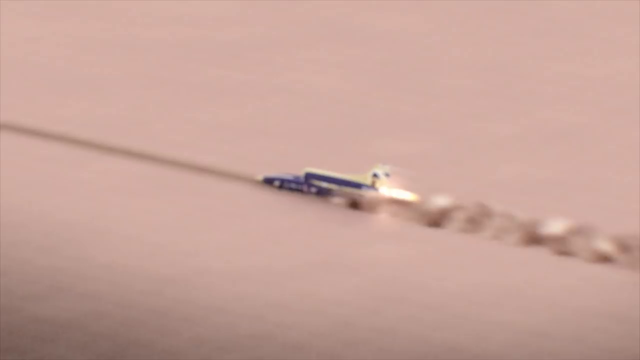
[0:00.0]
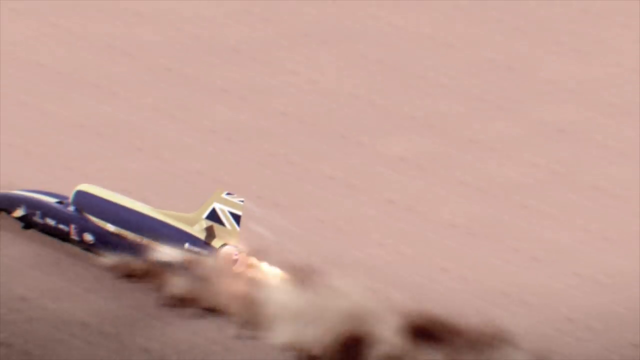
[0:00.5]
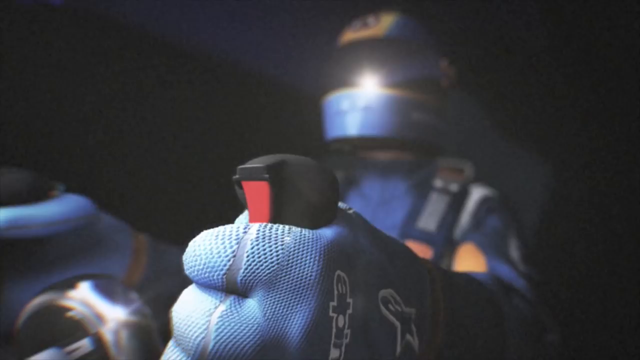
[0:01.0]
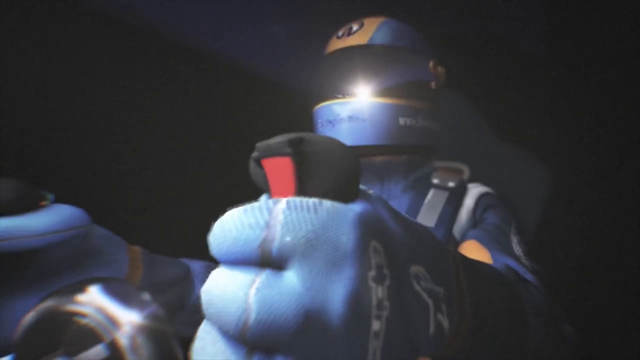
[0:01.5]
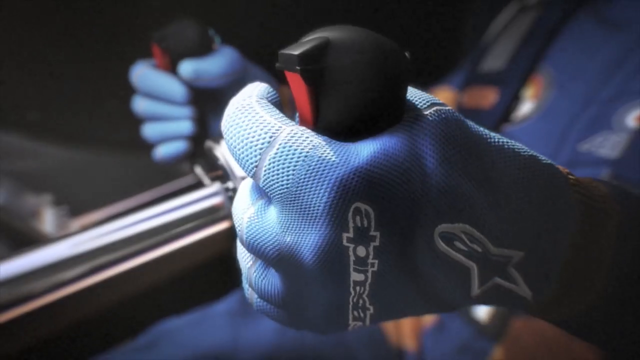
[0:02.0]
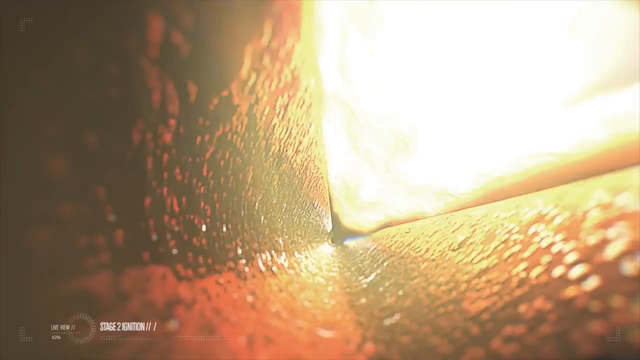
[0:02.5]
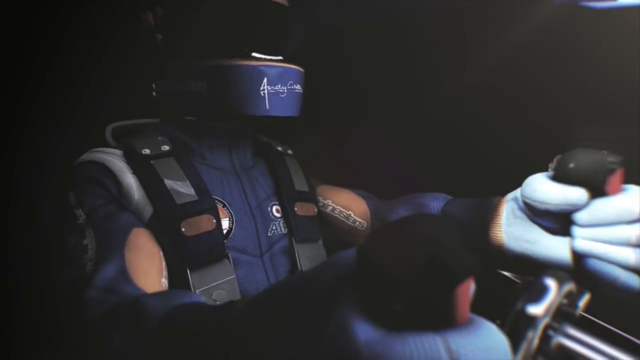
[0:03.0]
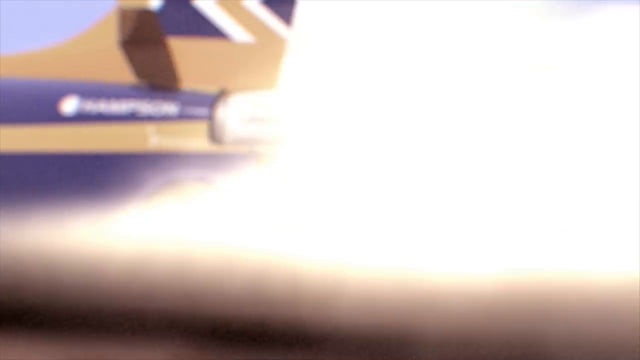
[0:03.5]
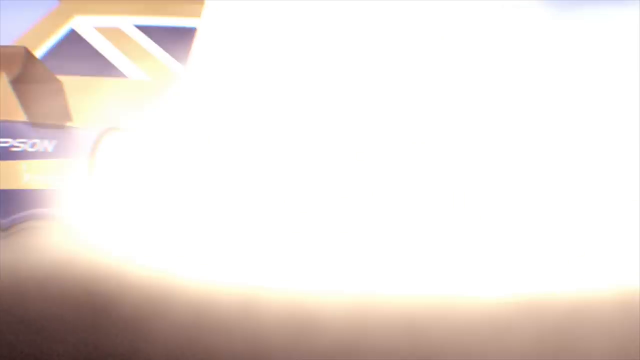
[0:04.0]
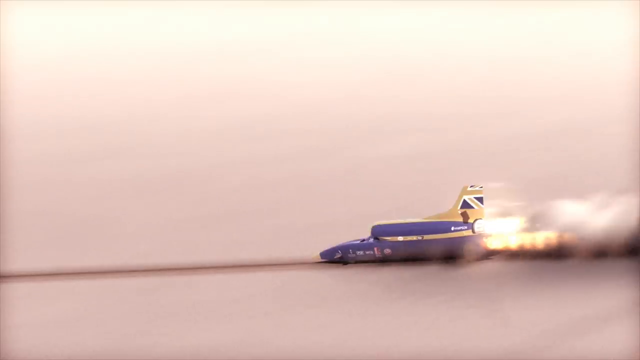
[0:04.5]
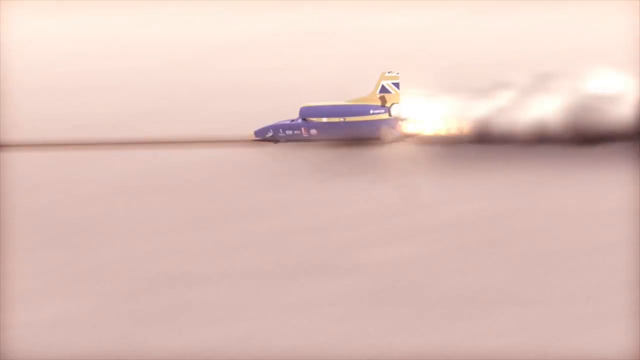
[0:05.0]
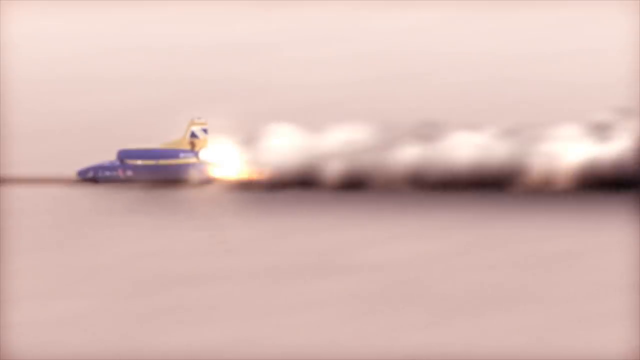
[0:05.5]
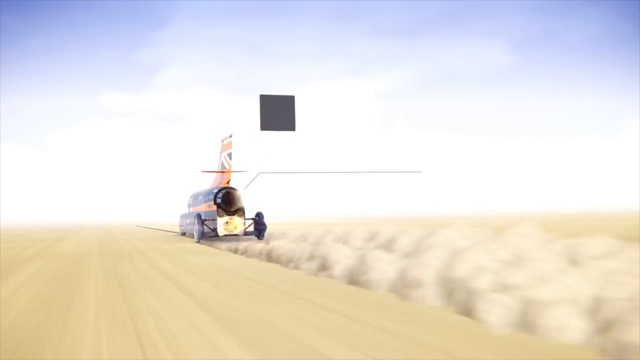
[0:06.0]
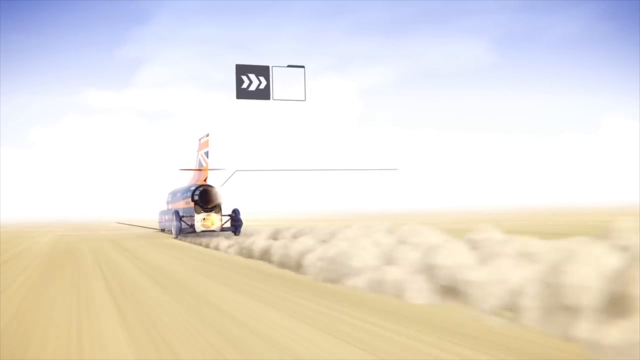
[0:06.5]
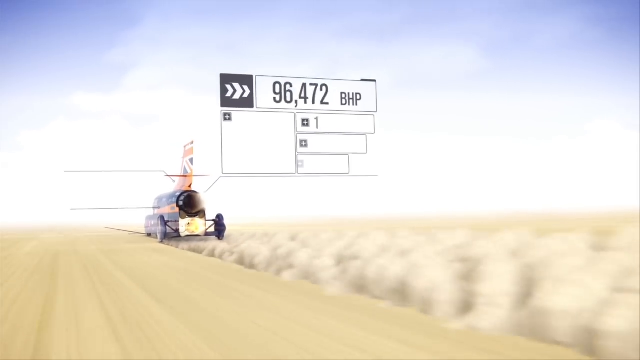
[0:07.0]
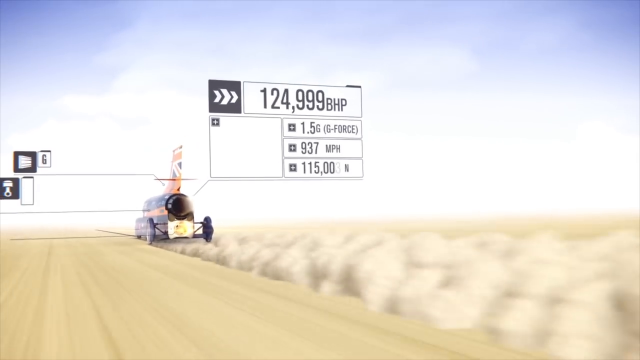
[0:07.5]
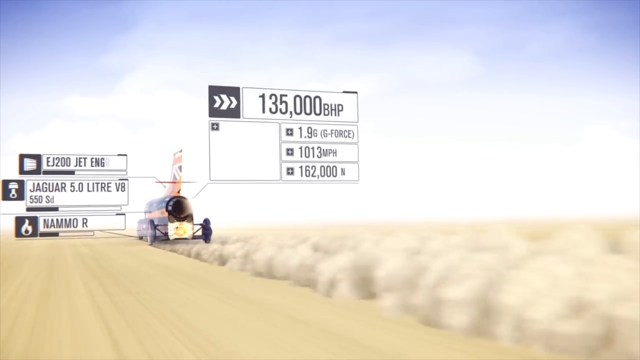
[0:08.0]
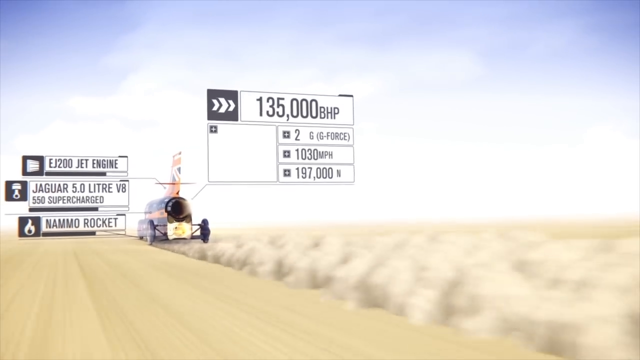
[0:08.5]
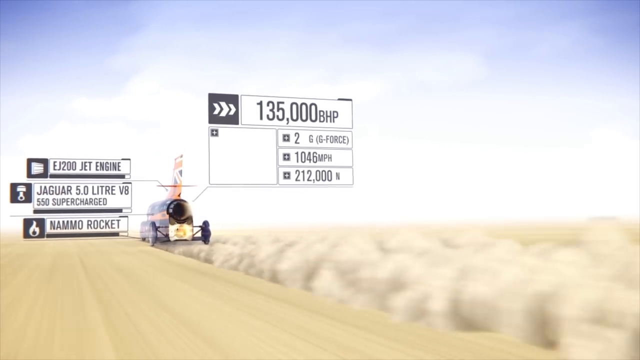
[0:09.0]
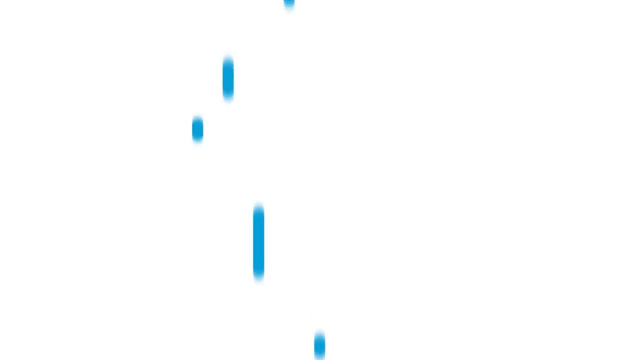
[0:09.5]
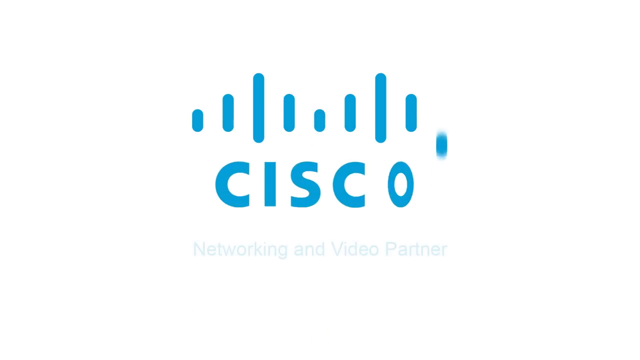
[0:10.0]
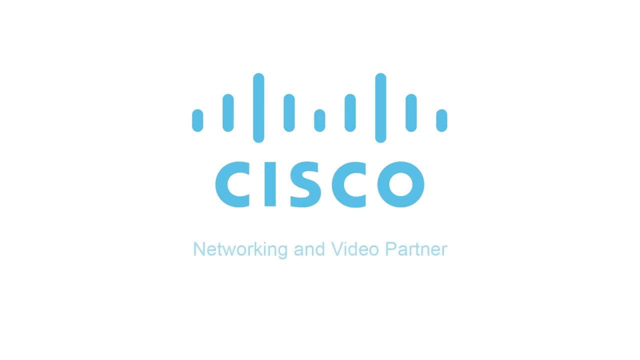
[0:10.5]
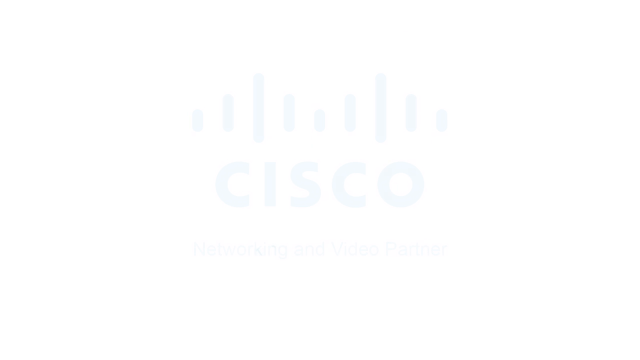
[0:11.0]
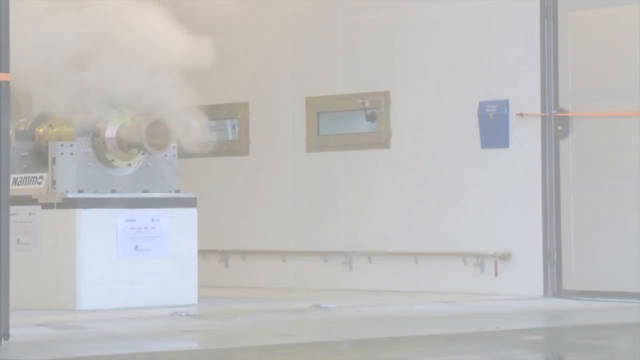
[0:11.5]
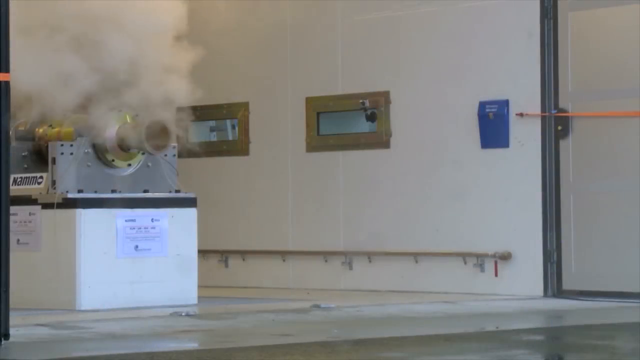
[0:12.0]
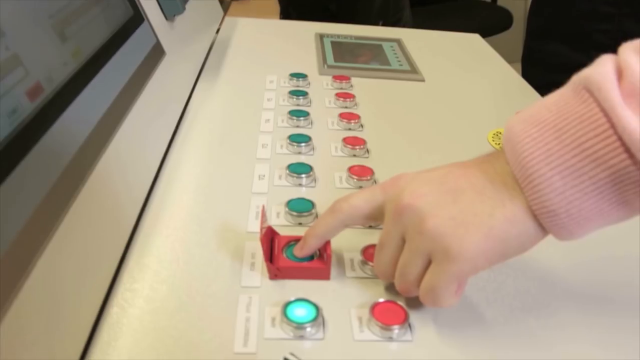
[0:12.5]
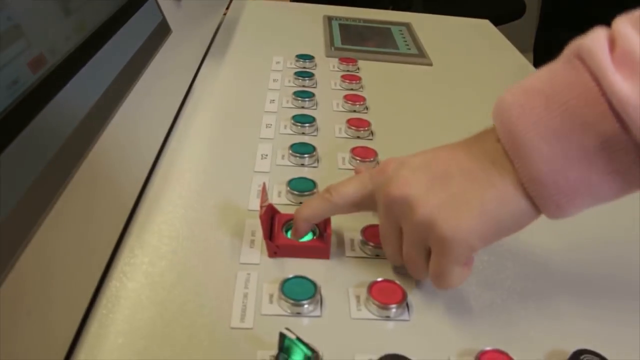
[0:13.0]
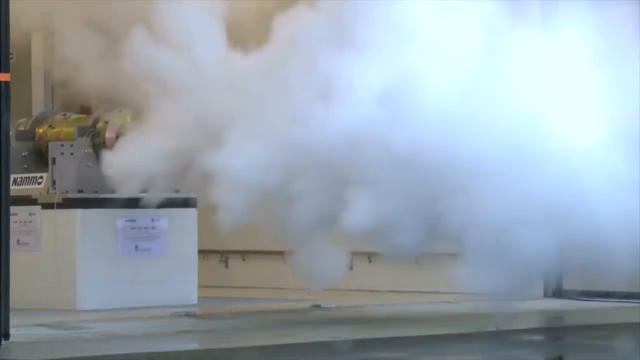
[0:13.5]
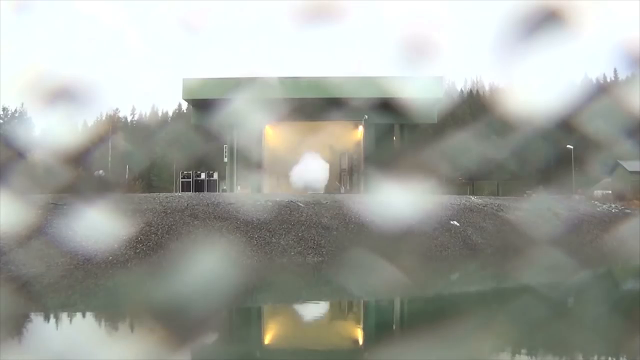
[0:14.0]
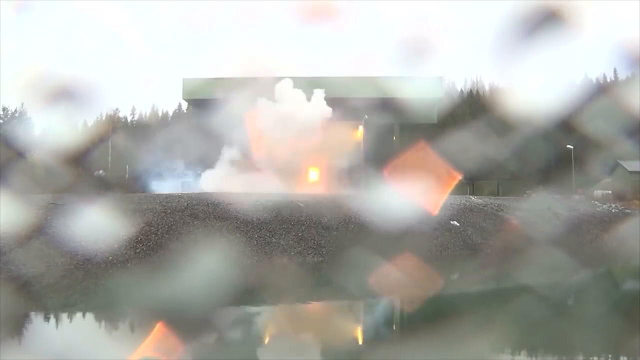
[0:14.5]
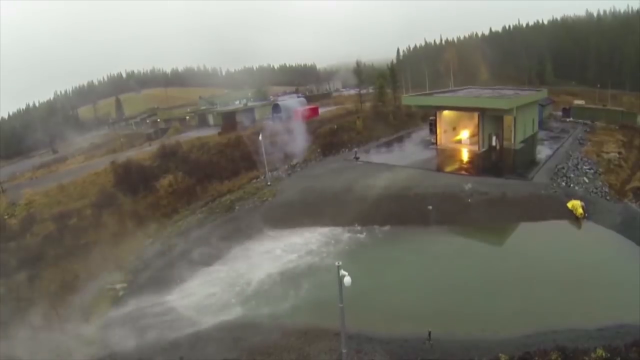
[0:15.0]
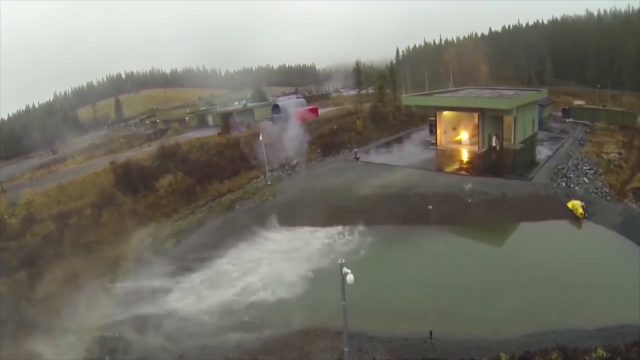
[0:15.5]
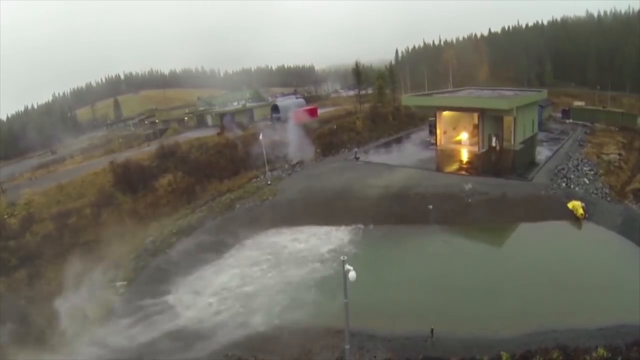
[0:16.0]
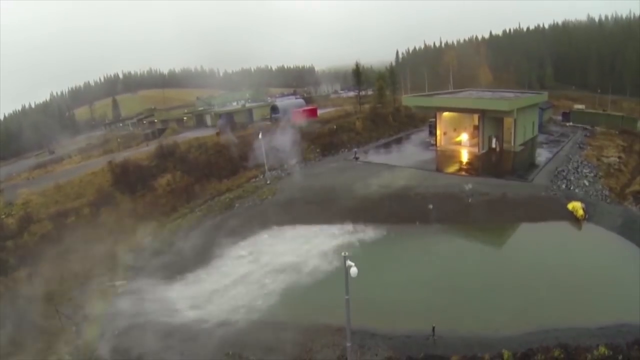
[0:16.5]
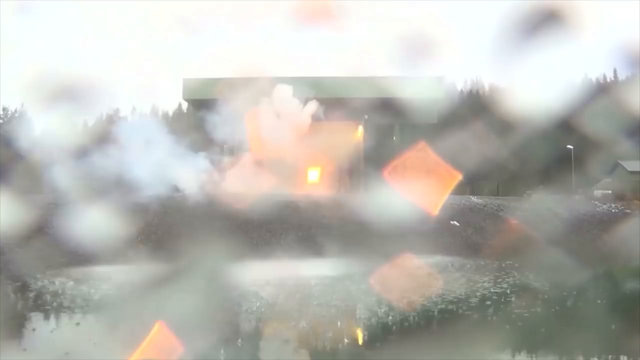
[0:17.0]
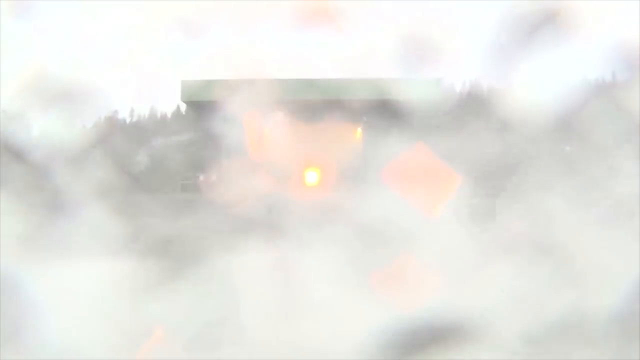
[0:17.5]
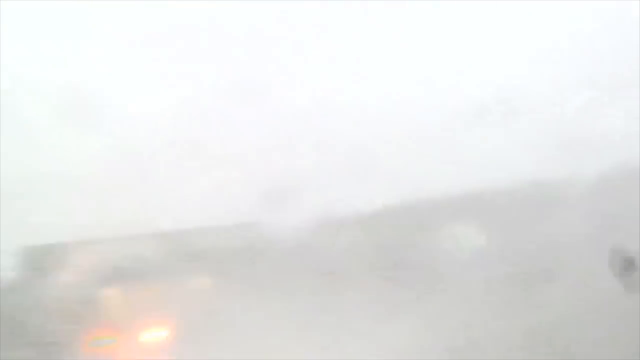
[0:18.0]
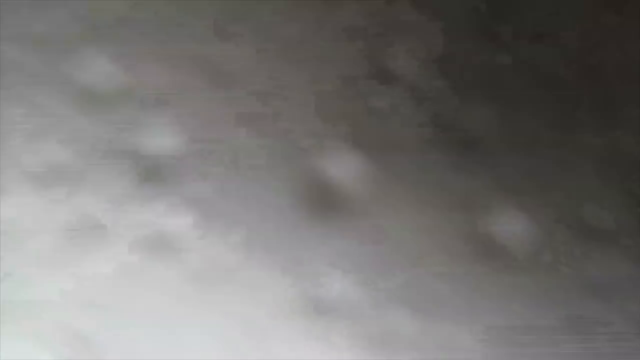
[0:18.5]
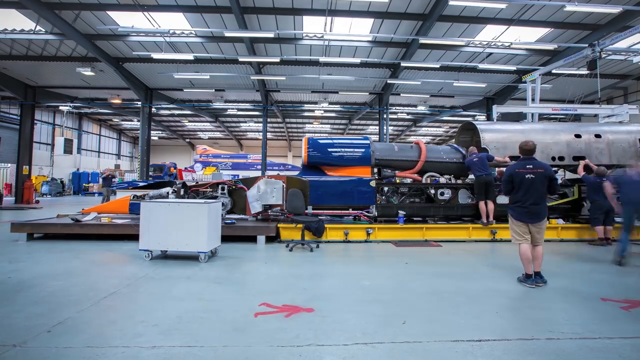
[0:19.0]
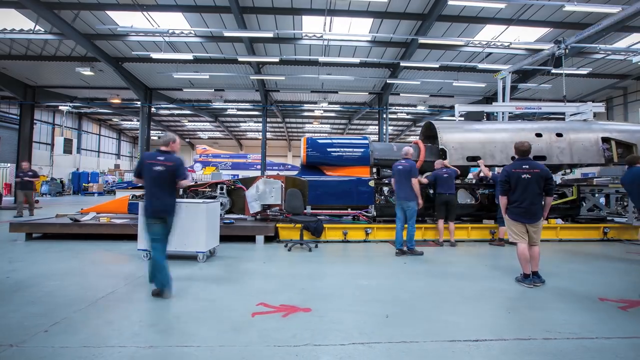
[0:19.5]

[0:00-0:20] A dark blue rocket car speeds across what looks like a desert, with smoke billowing and fire behind it. Inside the car, a driver wears a dark blue fire-retardant uniform with orange accents, a helmet whose dark face shield completely obscures his face, a harness with two straps over his shoulders, and gloves gripping a steering wheel that looks more like two joysticks connected together. Red buttons on the back side are not being pressed. Next, the back of the rocket car is seen racing along with a lot of fire and smoke, going very fast in a straight line through the desert. Computer imagery then pops up behind the rocket car, ending with "135,000 BHP" and then "1,031 miles per hour." The Cisco logo appears, followed by a person pressing a green button inside a room; outside the room, a gold object shoots out smoke that goes from the building to the outside. The scene then moves to a warehouse.